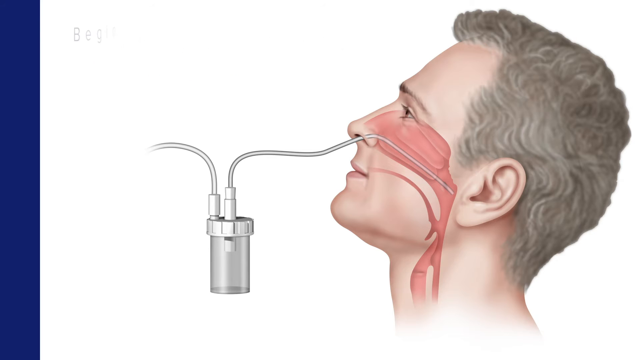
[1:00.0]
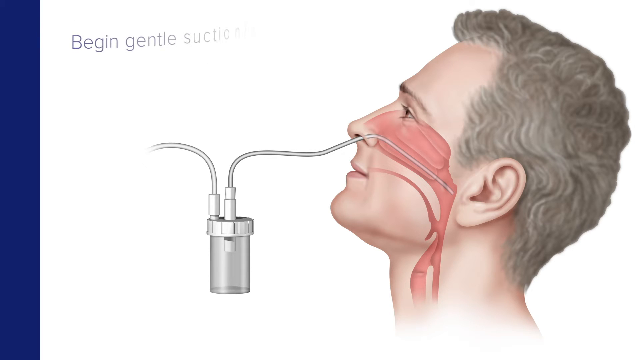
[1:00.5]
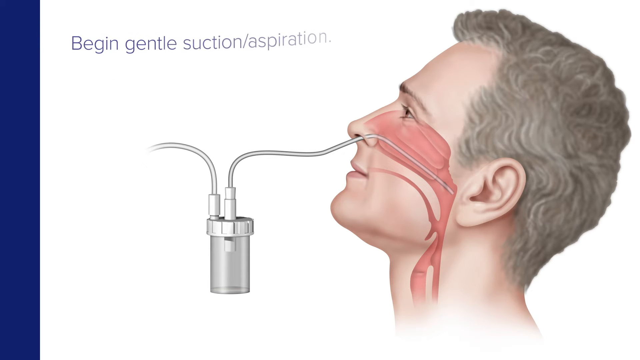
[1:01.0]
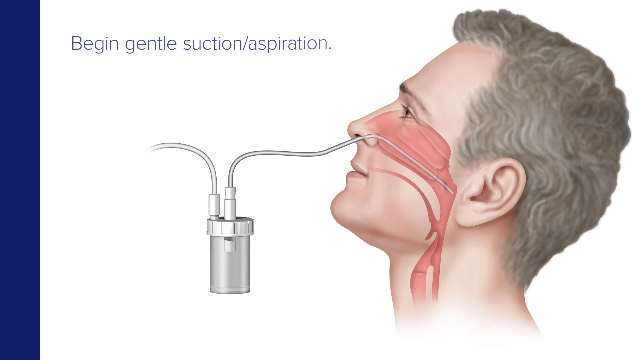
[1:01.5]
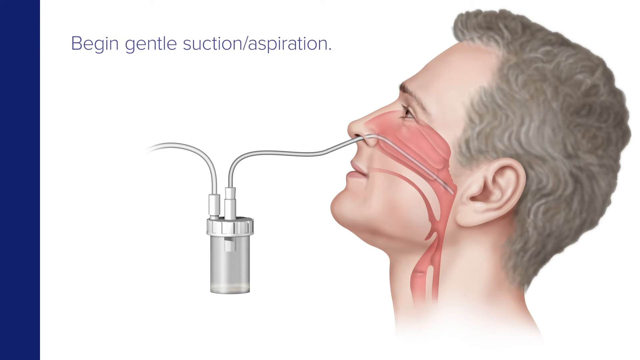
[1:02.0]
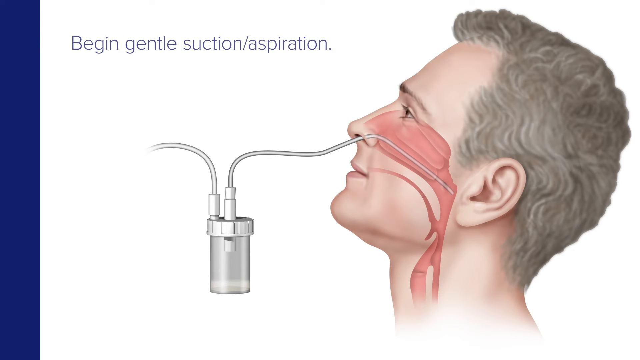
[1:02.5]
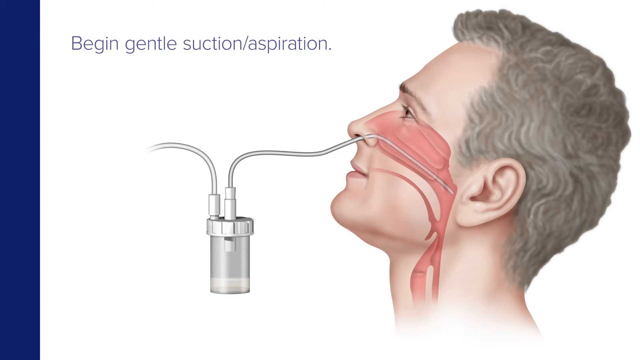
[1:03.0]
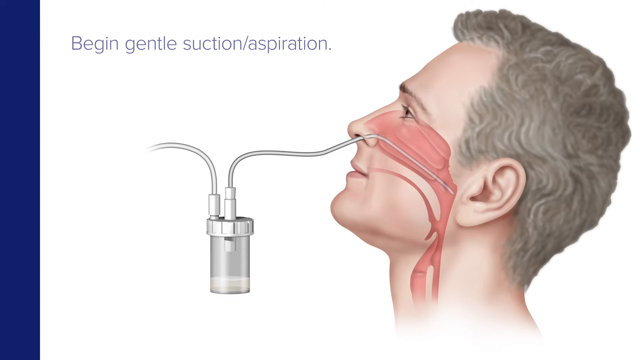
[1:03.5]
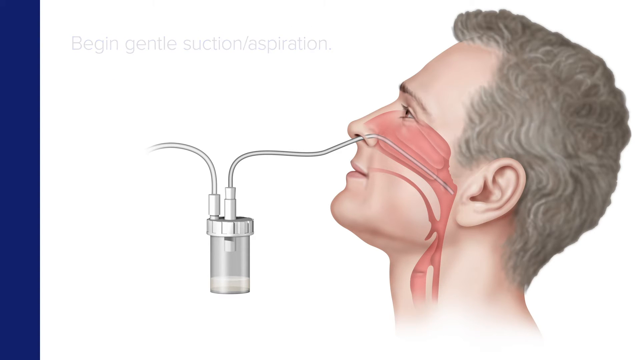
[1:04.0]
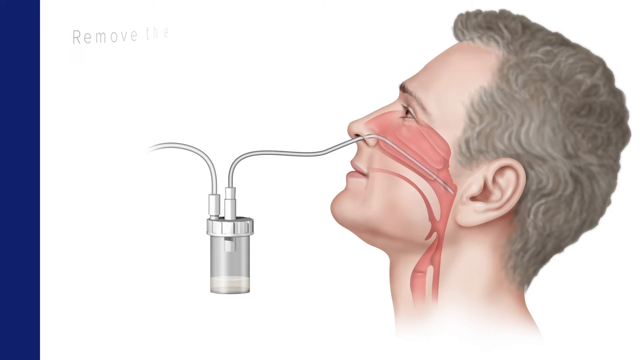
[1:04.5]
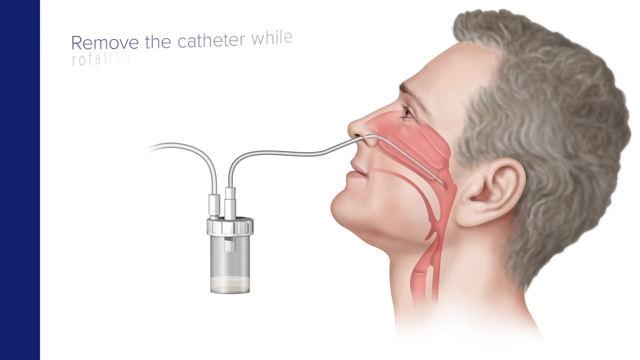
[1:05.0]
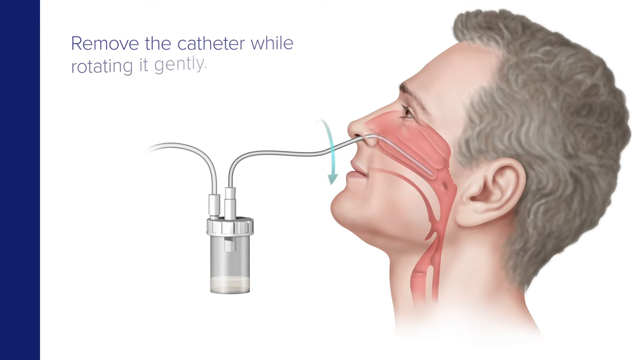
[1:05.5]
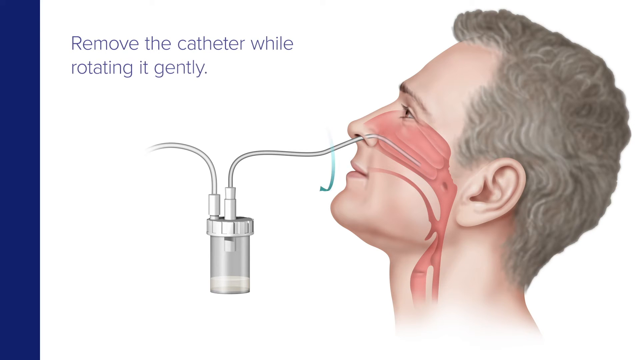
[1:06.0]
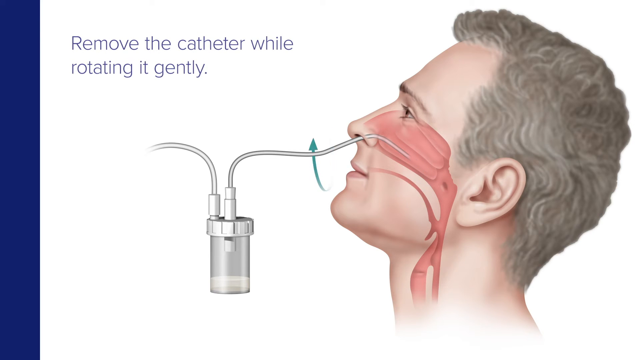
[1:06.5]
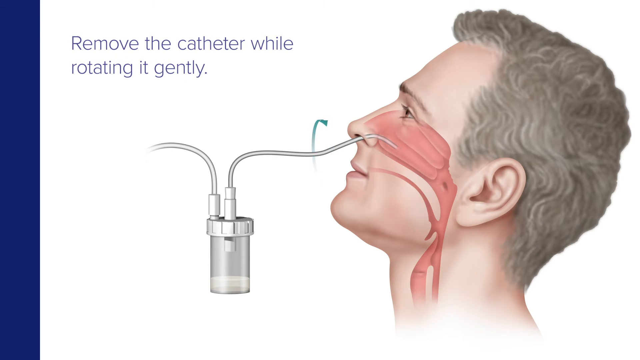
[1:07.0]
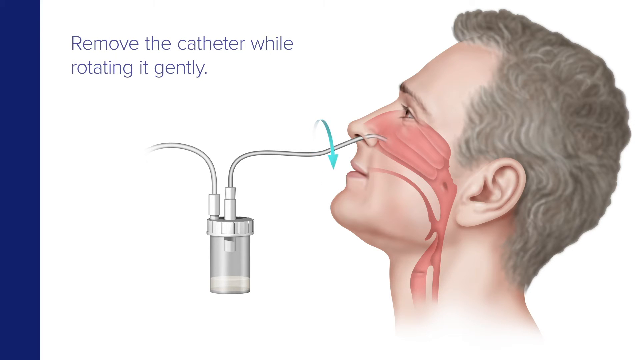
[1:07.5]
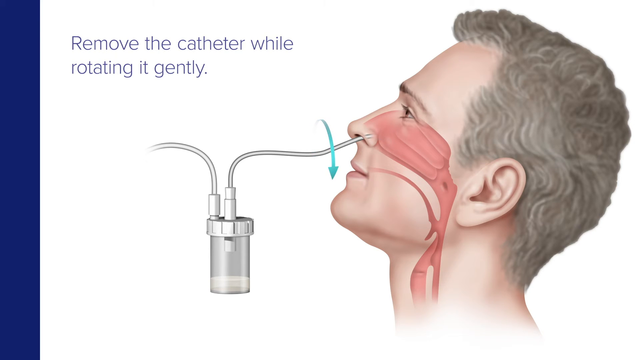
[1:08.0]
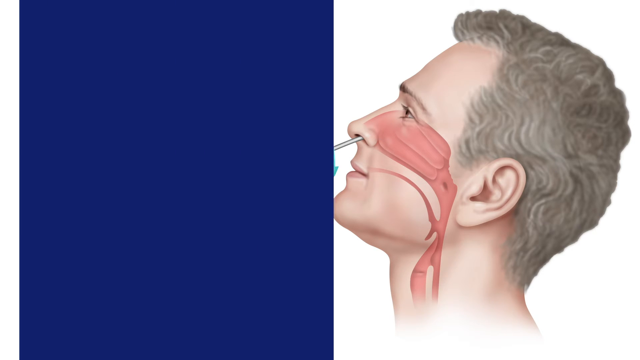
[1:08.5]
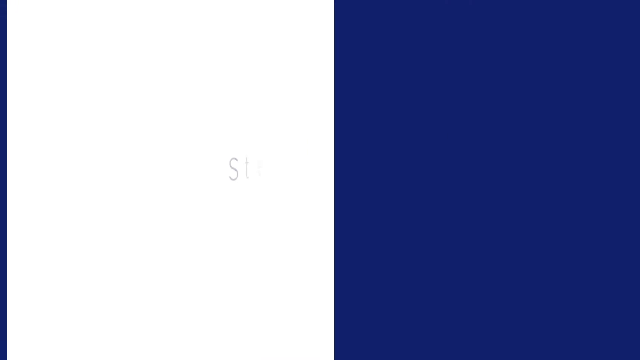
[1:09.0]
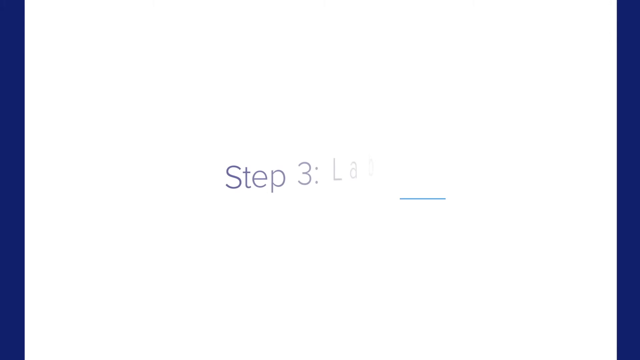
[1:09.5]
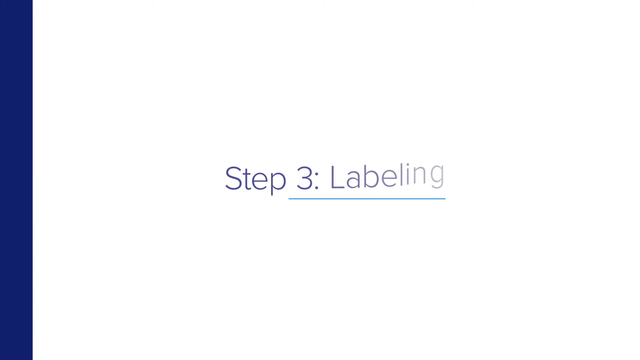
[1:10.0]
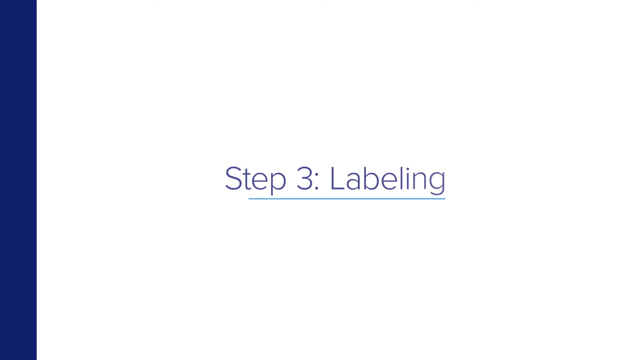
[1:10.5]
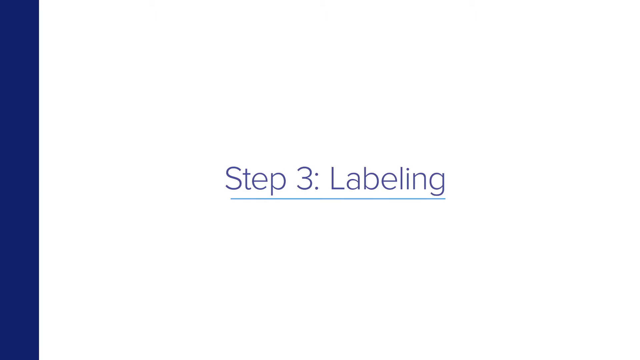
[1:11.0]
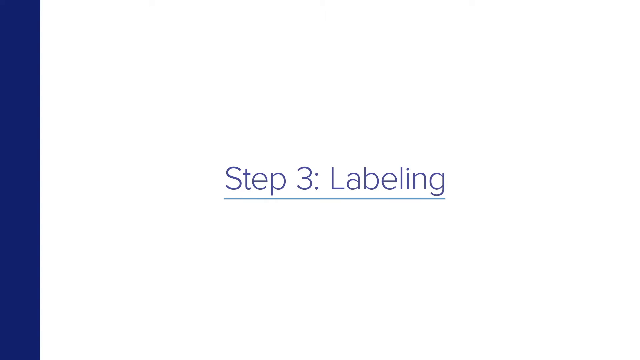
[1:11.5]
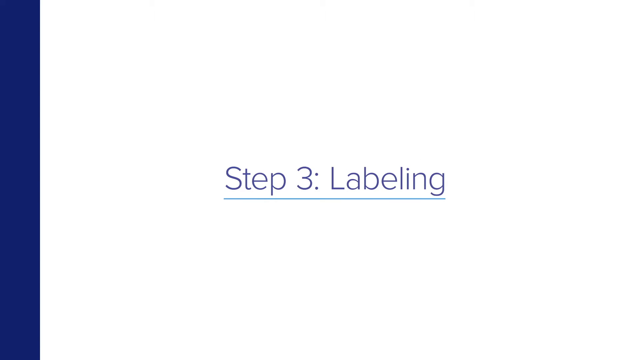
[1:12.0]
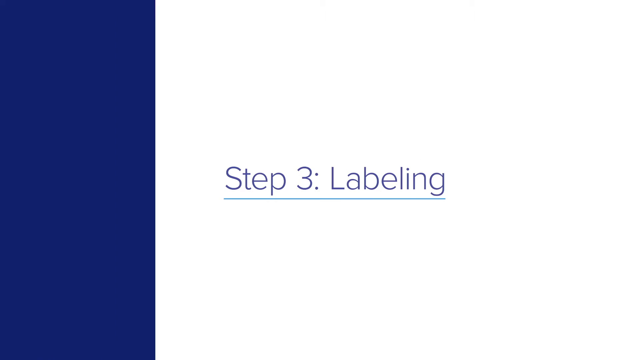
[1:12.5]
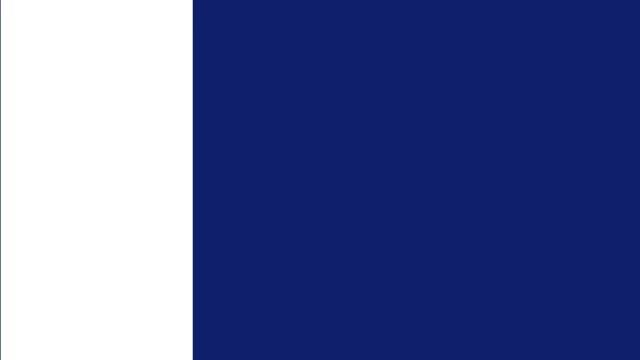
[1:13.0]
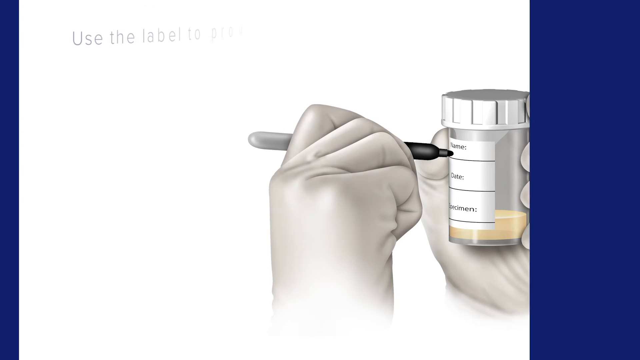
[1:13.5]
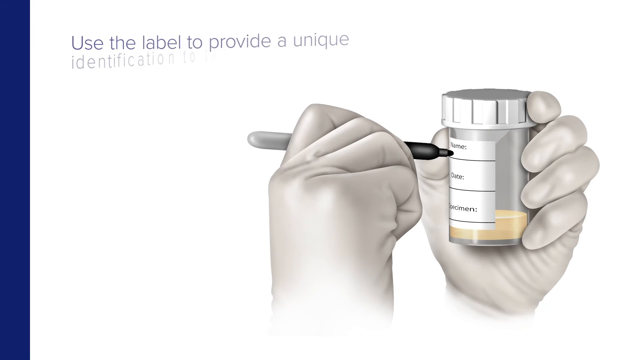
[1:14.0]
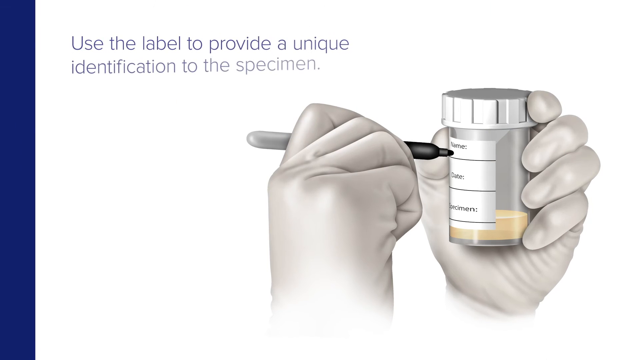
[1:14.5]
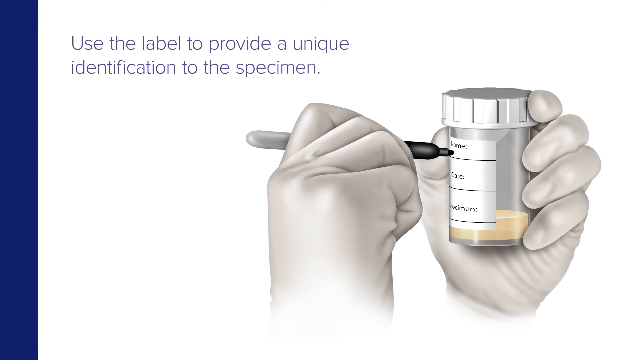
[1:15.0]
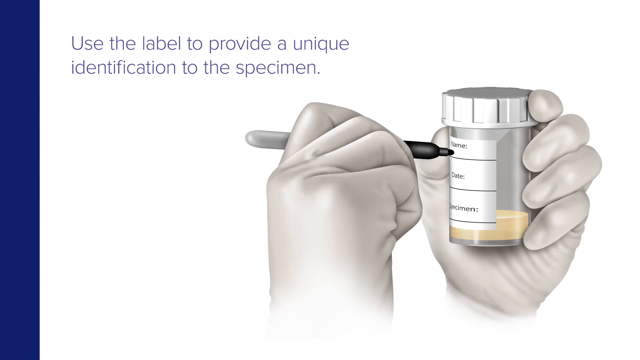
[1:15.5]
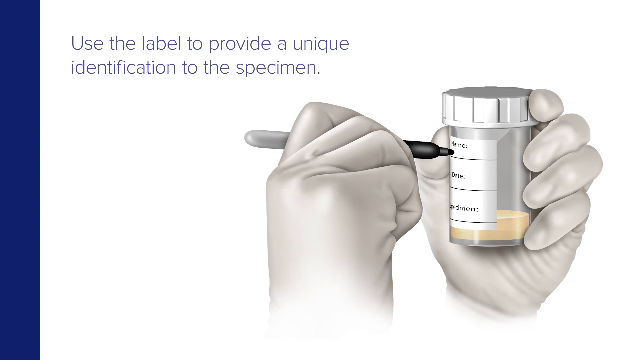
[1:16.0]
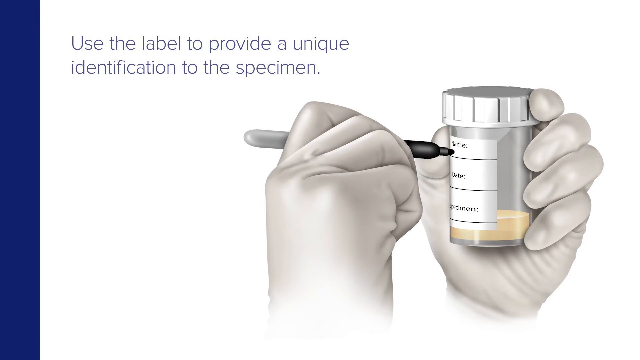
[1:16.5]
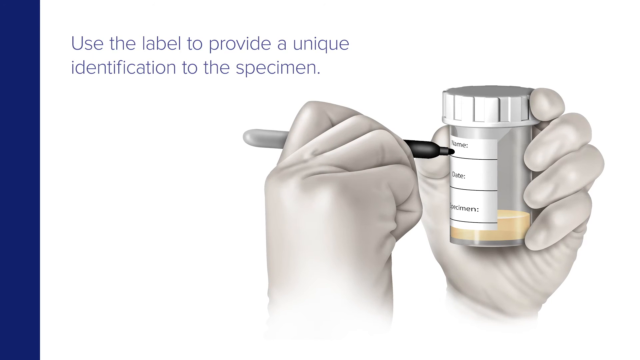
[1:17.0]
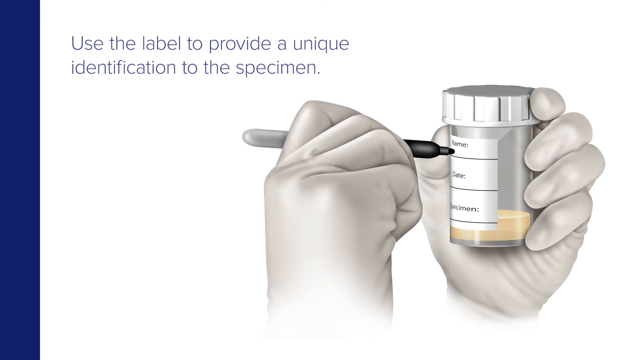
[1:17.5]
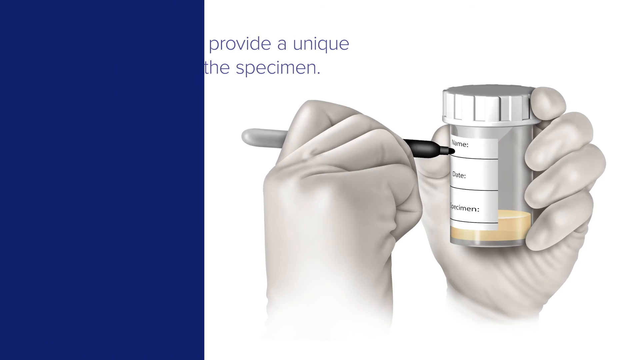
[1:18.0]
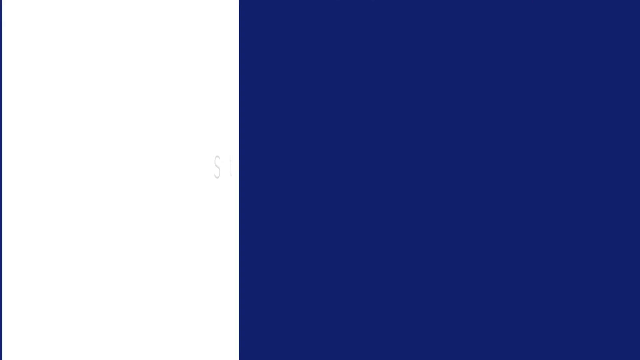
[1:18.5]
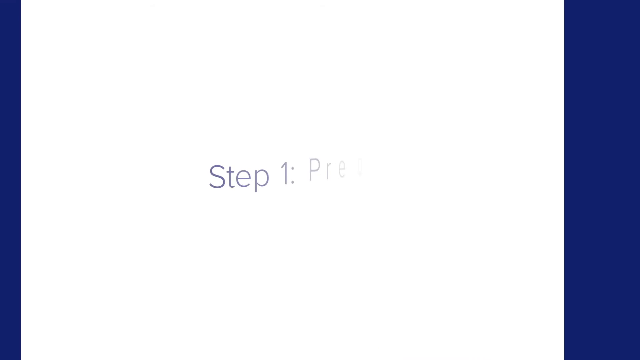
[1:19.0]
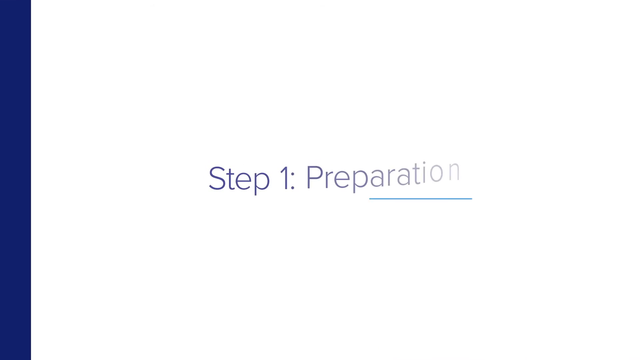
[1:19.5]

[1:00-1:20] The illustrated man leans his head back with the tube up his nose, reaching almost to his ear. Blue lettering at the top says "begin gentle suction/aspiration," then those words disappear and it says "remove the catheter while rotating it gently." A small teal arrow appears near the tube about two inches out from his nostril and swirls around, as if indicating to swirl the tube. The royal blue left border widens and slides across the screen, wiping it, and blue lettering on a white background says "step three labeling." The blue swipes across, and an illustration shows two hands that appear to wear white gloves: the right hand holds a pen and the left holds a covered specimen bottle shaped almost like a pharmacy medicine bottle, with nothing written on it yet. The sticker on the bottle seems to say "name" with a line to write on, then maybe "date" with a line, and "specimen" with another line. Navy words at the upper left say "use the label to provide a unique identification to the specimen," and then blue comes across the screen and wipes it out.